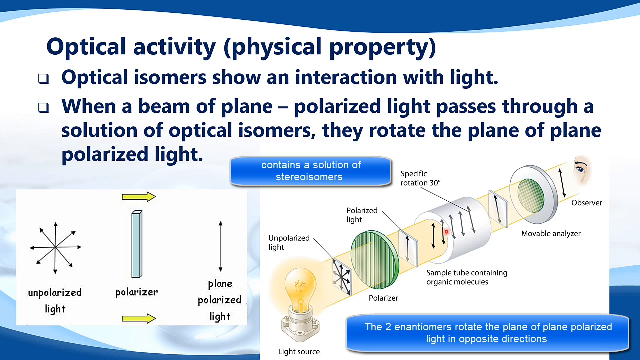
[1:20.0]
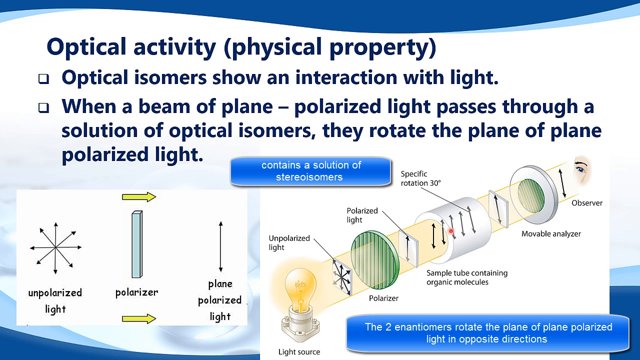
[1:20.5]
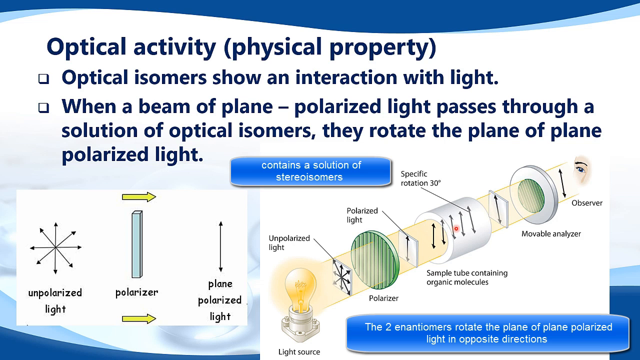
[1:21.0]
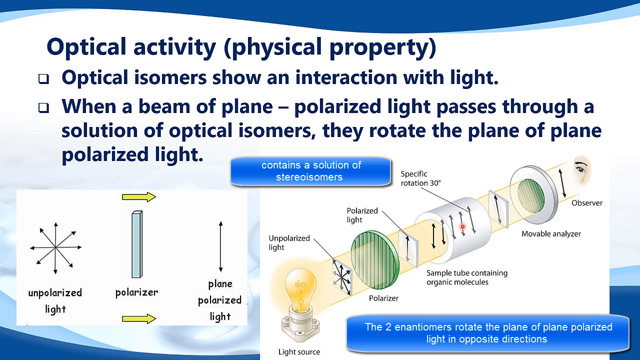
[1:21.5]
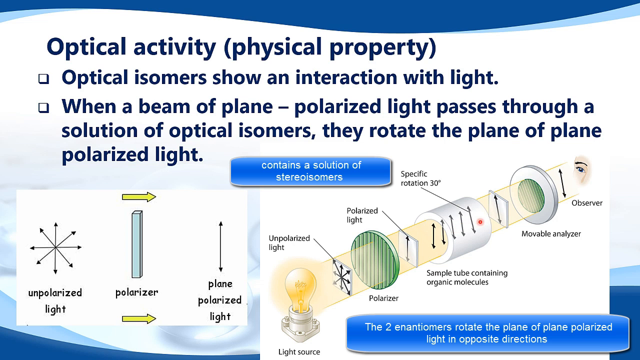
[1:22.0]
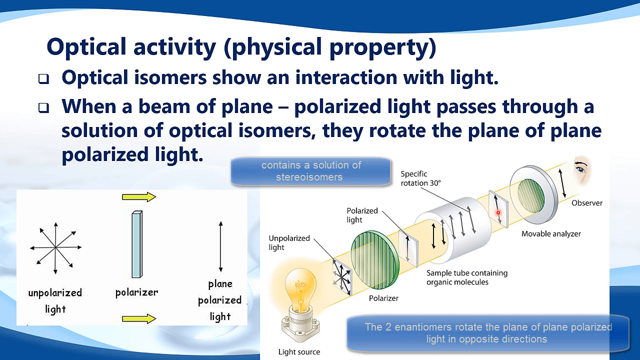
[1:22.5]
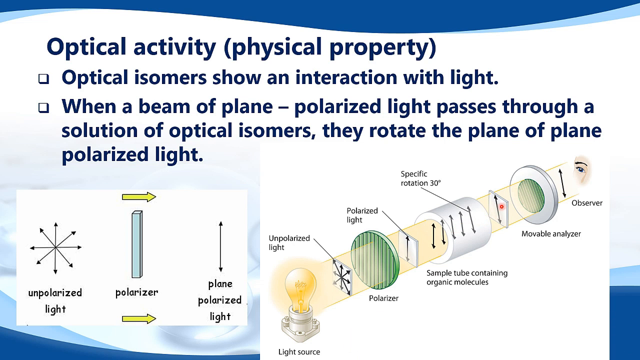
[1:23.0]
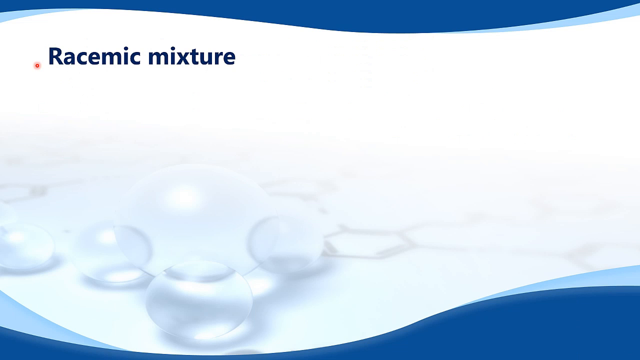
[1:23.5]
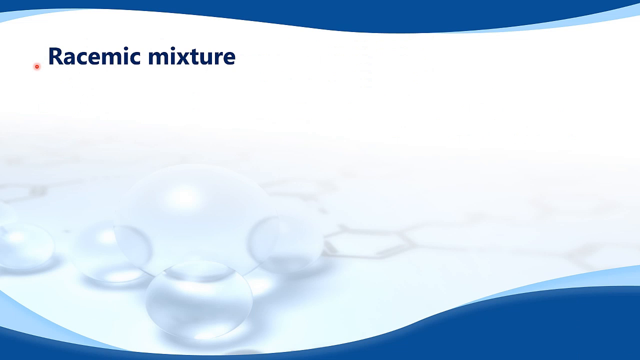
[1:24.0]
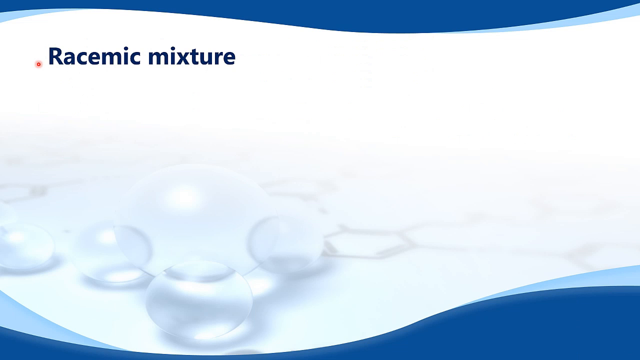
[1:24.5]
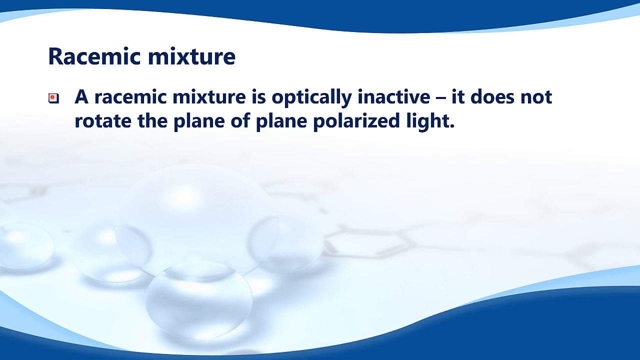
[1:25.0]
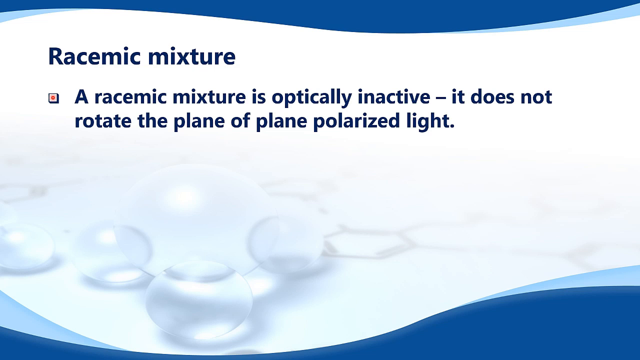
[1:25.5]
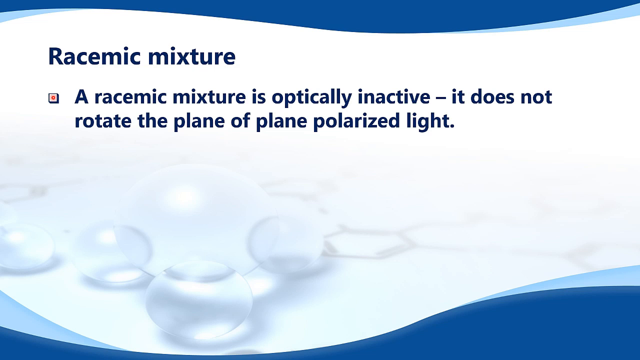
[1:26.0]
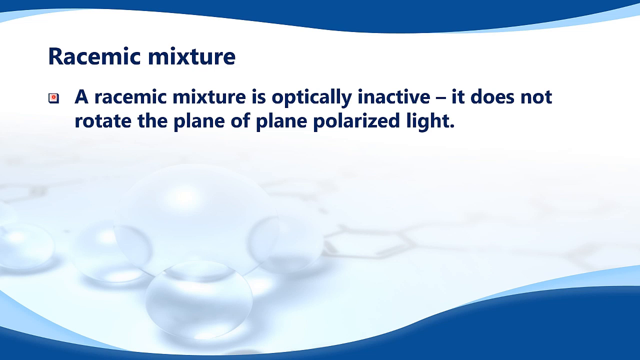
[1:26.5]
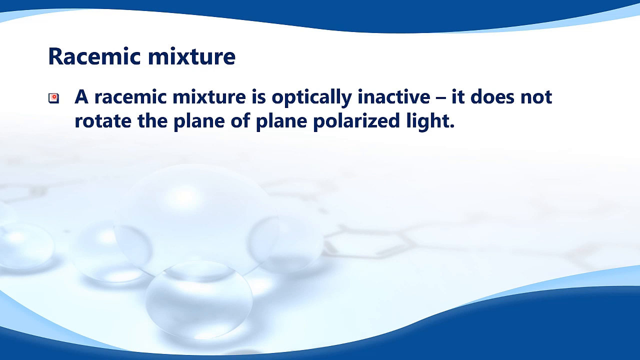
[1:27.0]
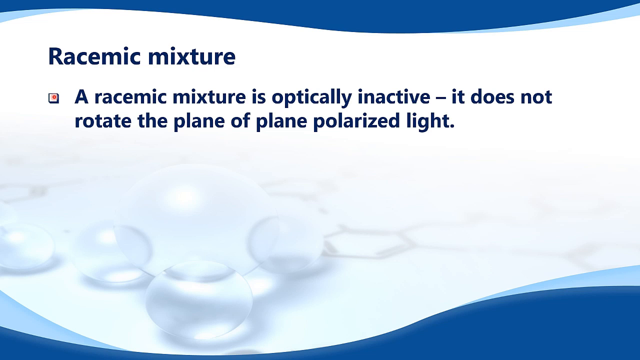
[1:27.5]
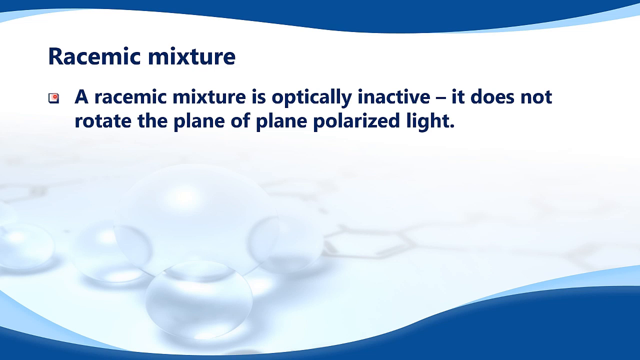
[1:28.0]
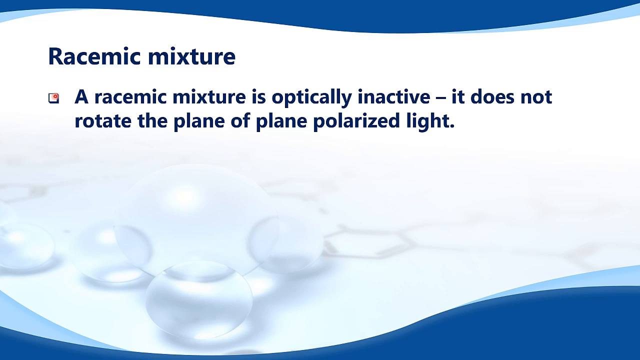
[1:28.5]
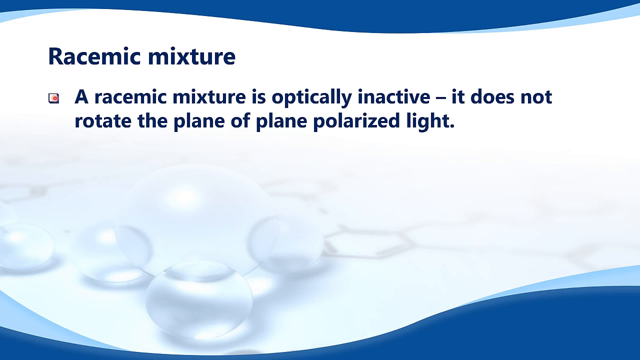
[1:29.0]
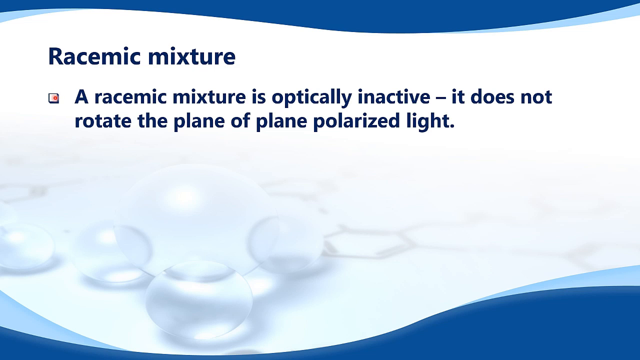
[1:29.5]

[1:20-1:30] The orange laser dot starts at the light bulb at the bottom and moves up through the diagram. After the green cap is another white square with a single black line with a little arrow at the top and bottom, like in the left graphic, labeled "polarized light" to the upper left. Underneath to the right is the label "sample tube containing organic molecules". There are spaces between all the items, and the beam of light is visible in those spaces. Five black lines with arrows at top and bottom, all vertical, go over the top of the white PVC pipe, and a black line goes up to a label at the upper left reading "specific rotation 30 degrees". To the right of the tubing is another white square with one of the same black arrow lines, but slightly tilted to the left rather than straight up and down. The other cap, on the right end of the pipe, is labeled underneath "movable analyzer"; it is a white cap with the same green texture as the polarizer, but only in the middle. To the right of that is another black line with up and down arrows, and then an eye: some flesh color and an eye with a black eyebrow, with "observer" in black underneath. Two blue text boxes come up. One is just underneath the dark text at the top, to the left of "specific rotation 30 degrees", and reads in small white text "contains a solution of stereo isomers". The other, a little larger, is at the bottom right with two lines of white text reading "the two enantiomers rotate the plane of plane polarized light in opposite directions". The text boxes then disappear.